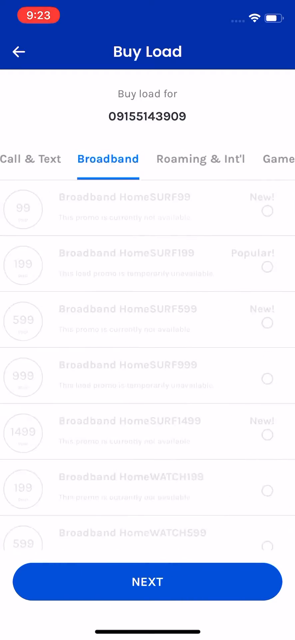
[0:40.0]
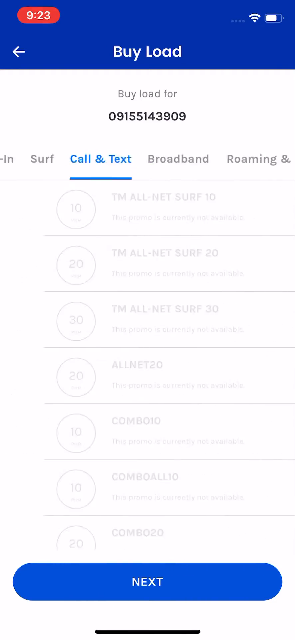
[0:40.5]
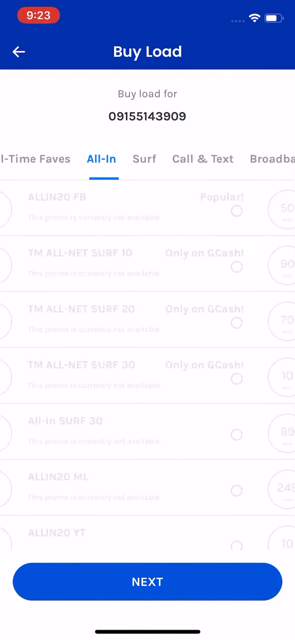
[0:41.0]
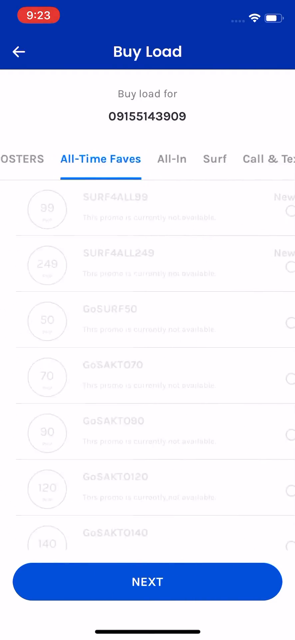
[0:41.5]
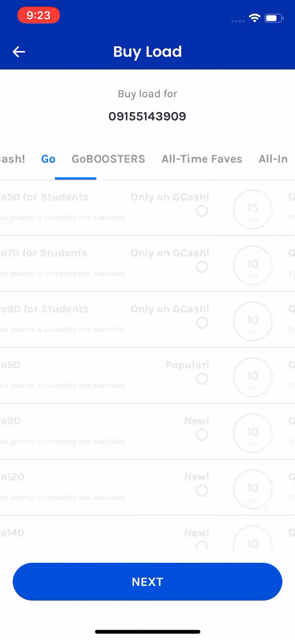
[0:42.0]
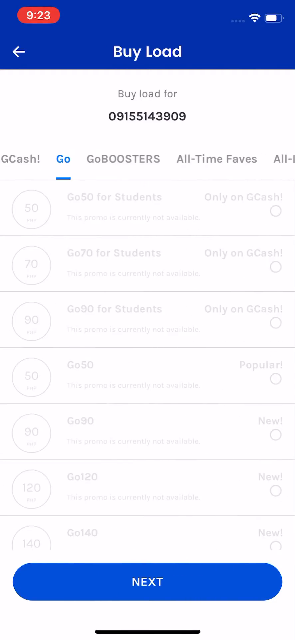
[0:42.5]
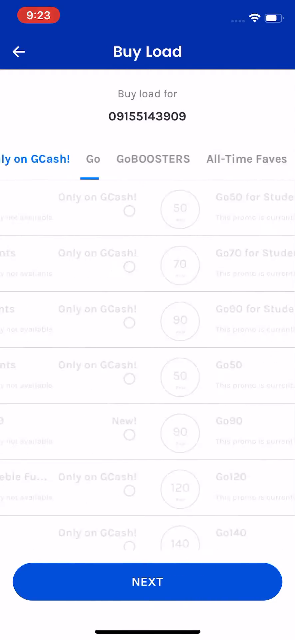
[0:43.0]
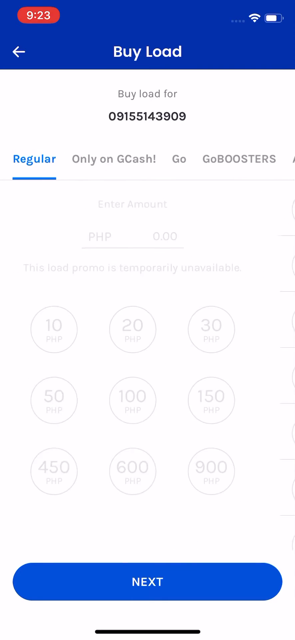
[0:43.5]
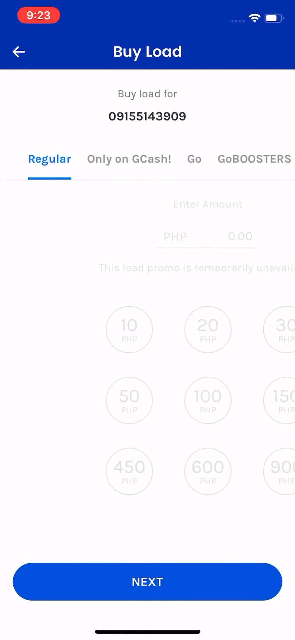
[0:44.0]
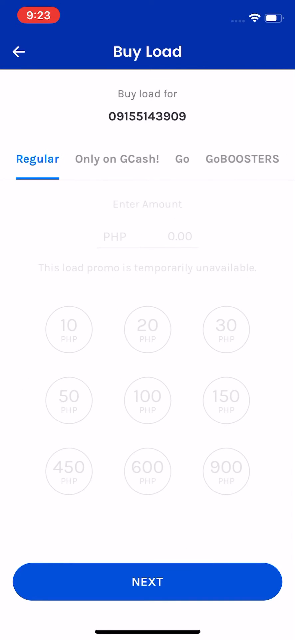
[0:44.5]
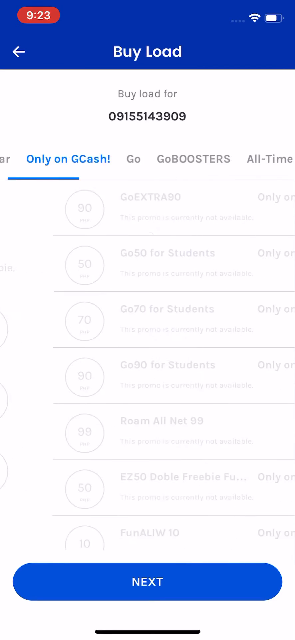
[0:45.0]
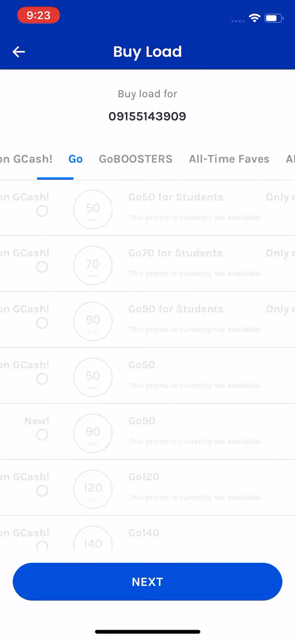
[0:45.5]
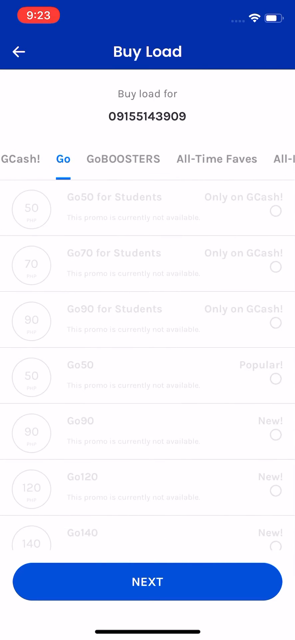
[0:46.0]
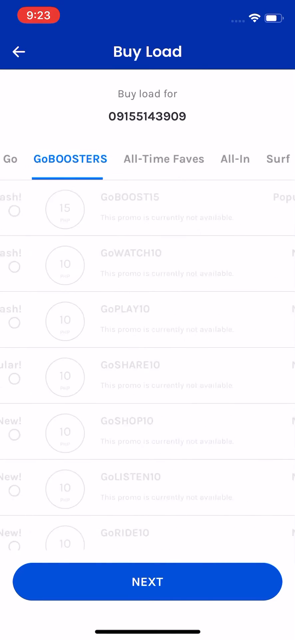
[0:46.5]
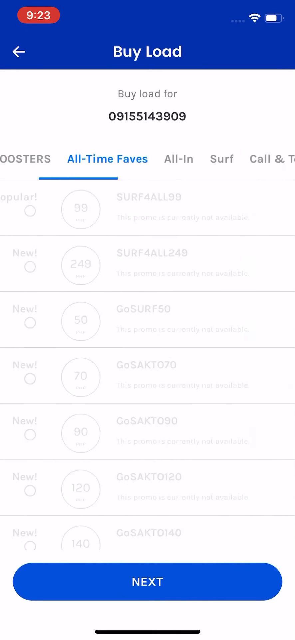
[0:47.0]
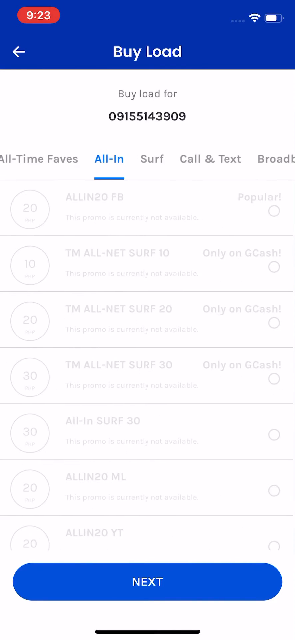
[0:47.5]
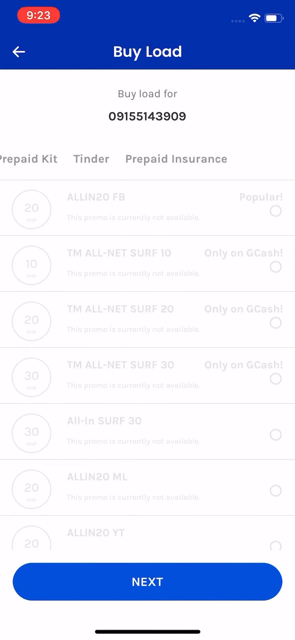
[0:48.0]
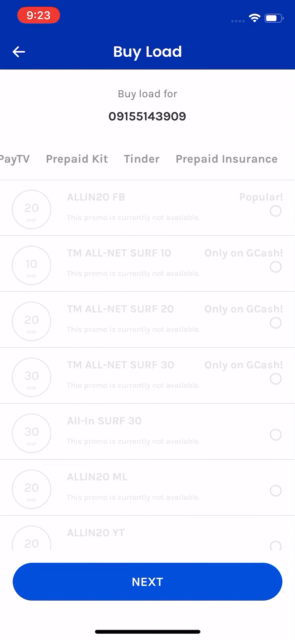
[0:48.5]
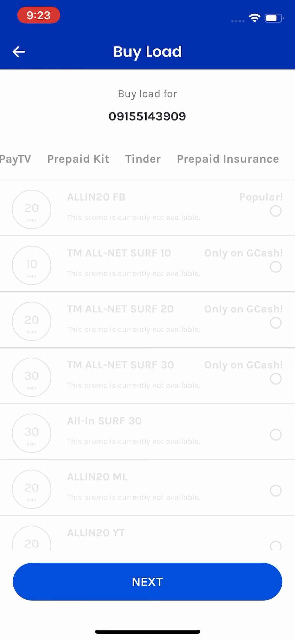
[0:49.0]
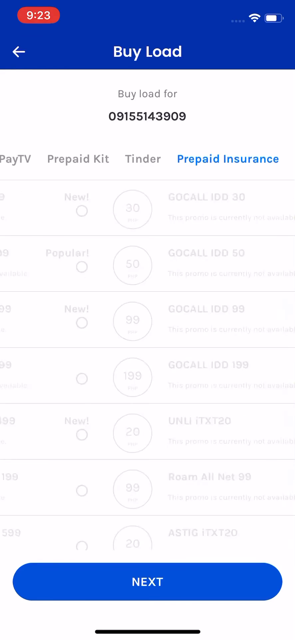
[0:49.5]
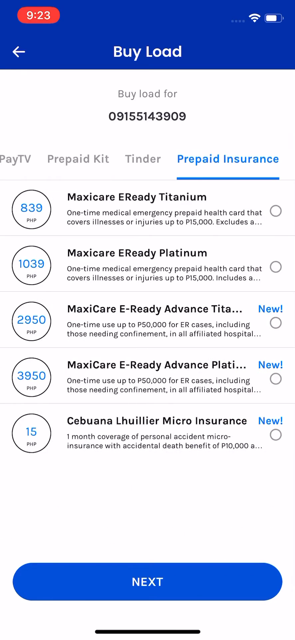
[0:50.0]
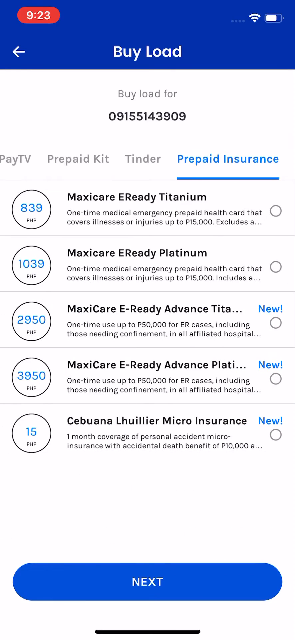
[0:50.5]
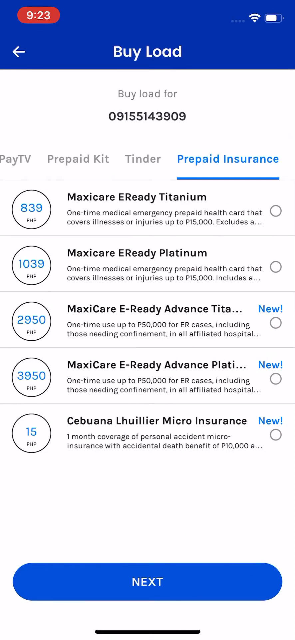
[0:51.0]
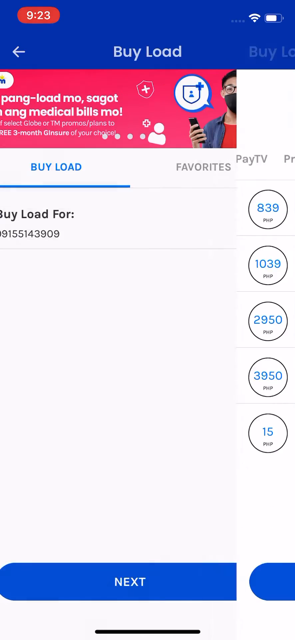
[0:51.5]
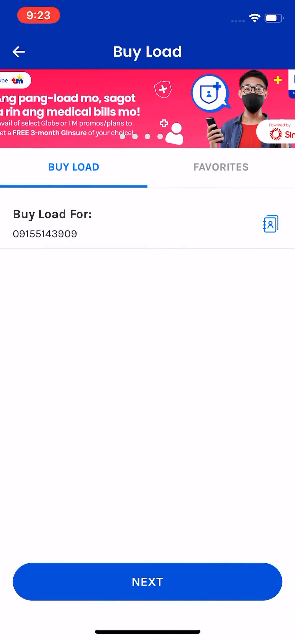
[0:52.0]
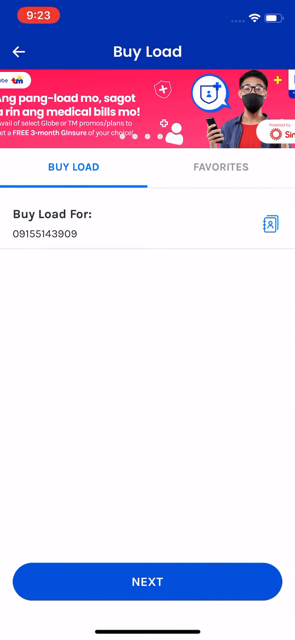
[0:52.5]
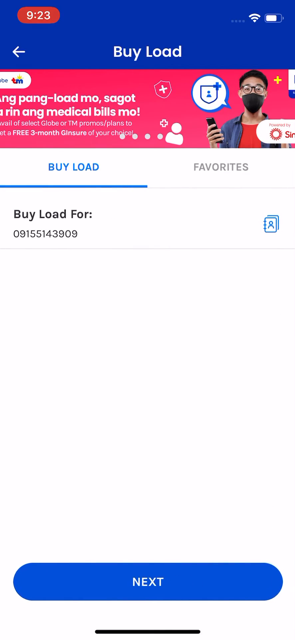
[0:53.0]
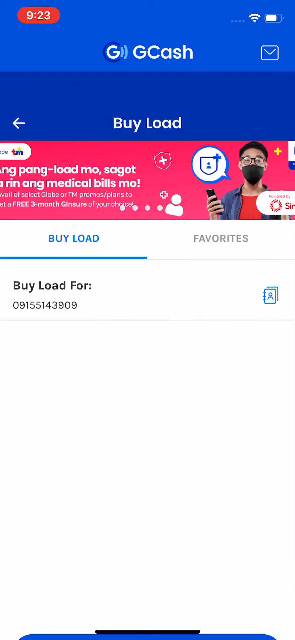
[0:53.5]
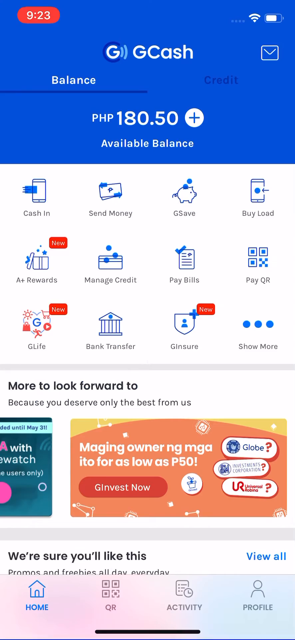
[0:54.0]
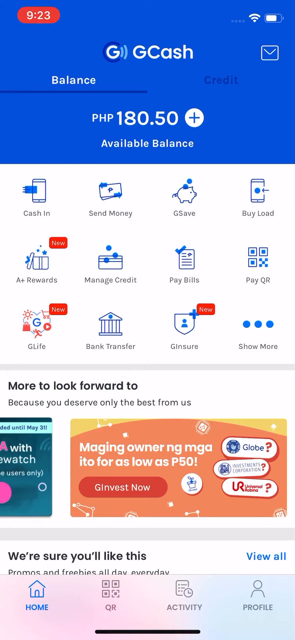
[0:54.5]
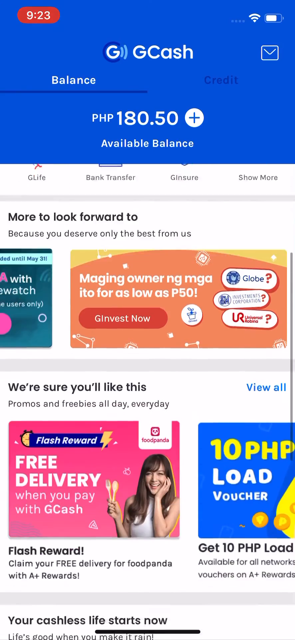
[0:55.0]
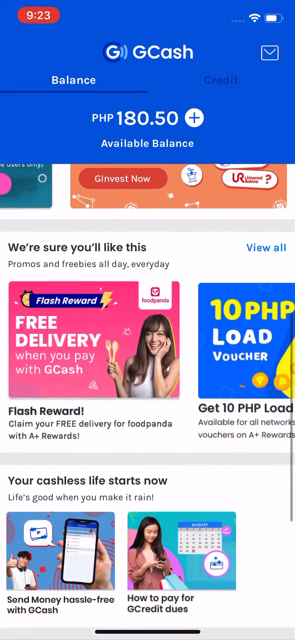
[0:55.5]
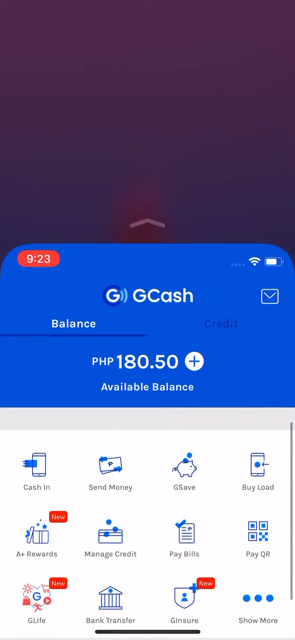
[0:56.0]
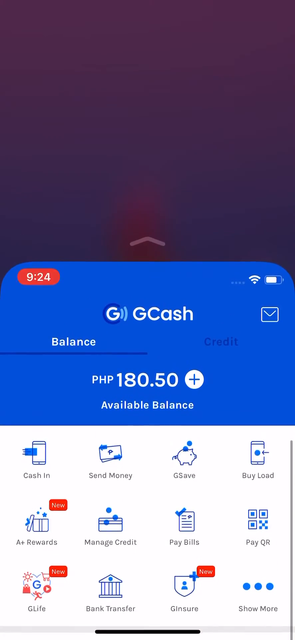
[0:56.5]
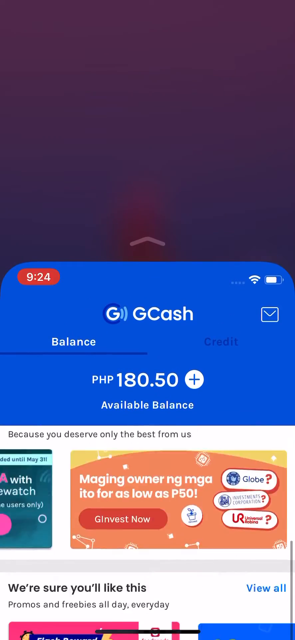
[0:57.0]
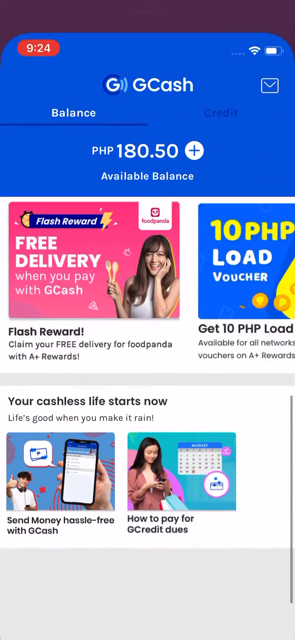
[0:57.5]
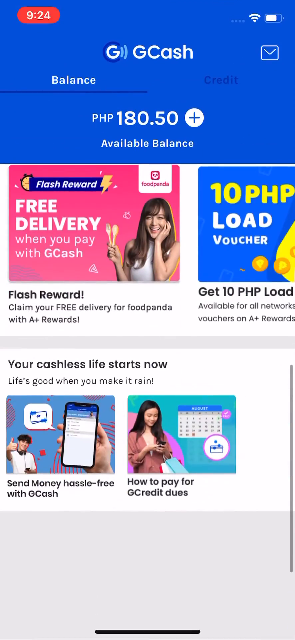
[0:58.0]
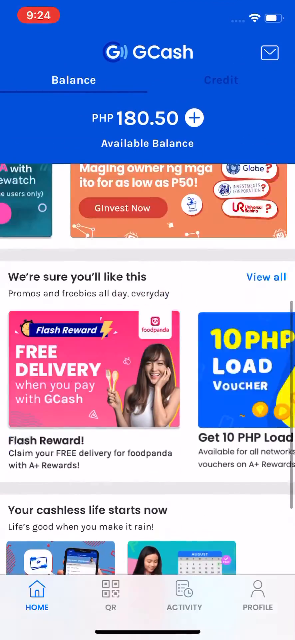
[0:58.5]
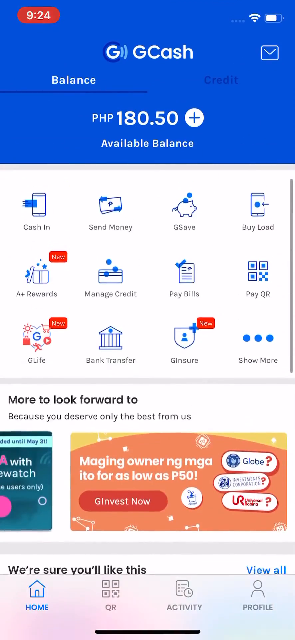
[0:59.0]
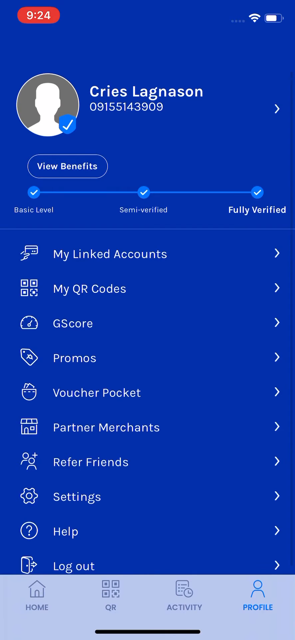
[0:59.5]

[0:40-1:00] The person scrolls to the very left, back to regular, then to the right all the way to prepaid insurance. They exit the buy load menu and return to the home screen, scrolling up a little so that half of the iPhone background is visible. Swiping to the left side, they go into their profile, scrolling down and then up almost out of the app. The name shown is Krize Legnasin, and there is no profile picture, just a generic white silhouette of a person. There is a timeline with basic level on the left, then something verified, then fully verified, and all three have check marks. Below are more menu buttons, such as my linked accounts, my QR codes, G-score, promos and voucher pocket.